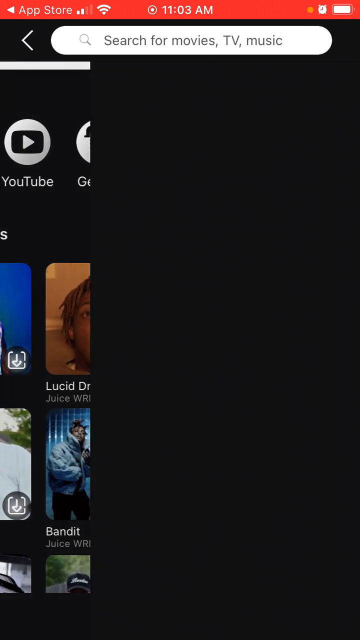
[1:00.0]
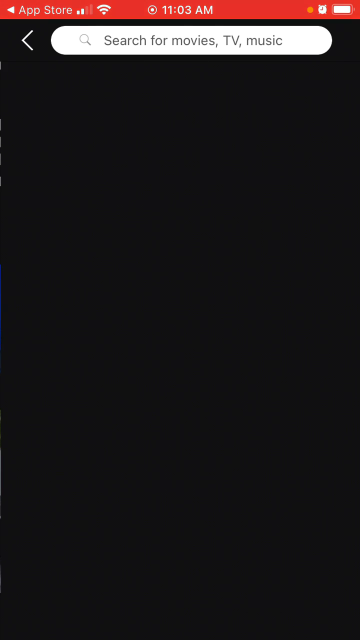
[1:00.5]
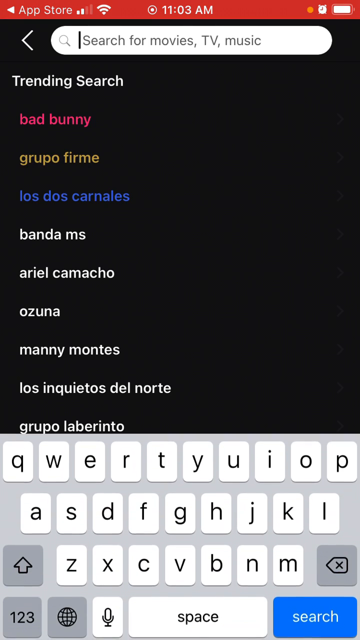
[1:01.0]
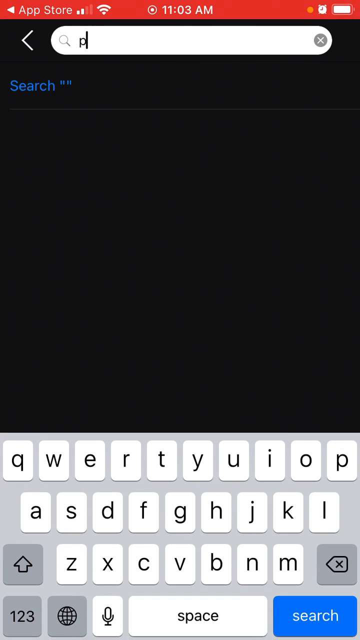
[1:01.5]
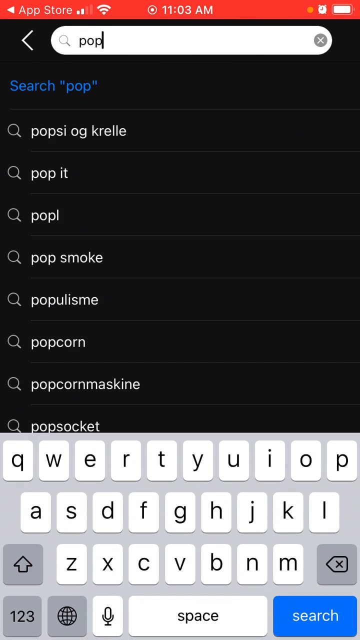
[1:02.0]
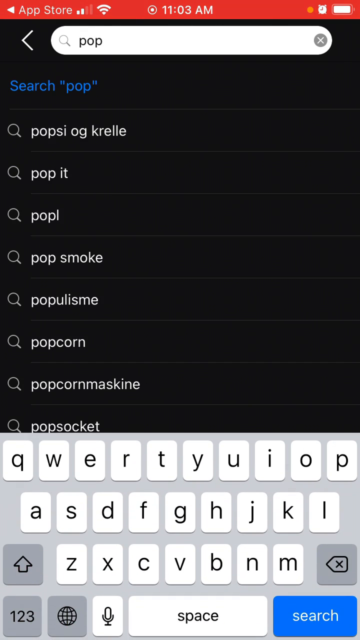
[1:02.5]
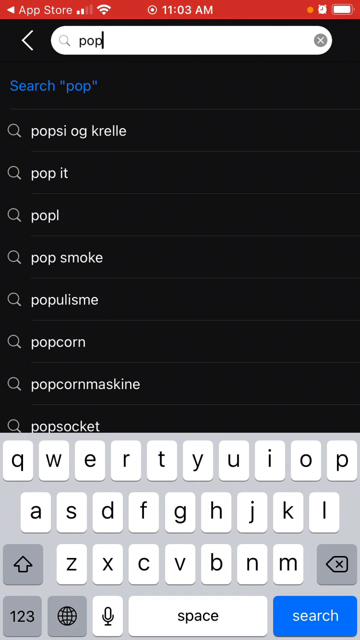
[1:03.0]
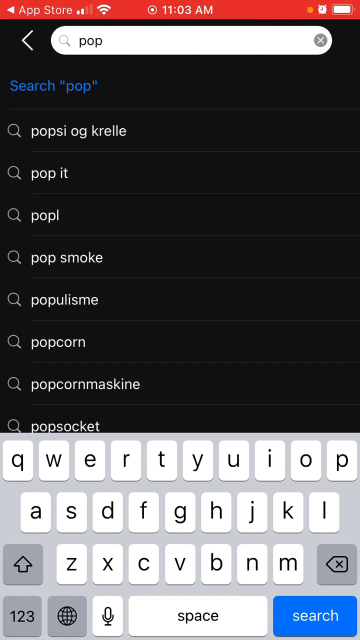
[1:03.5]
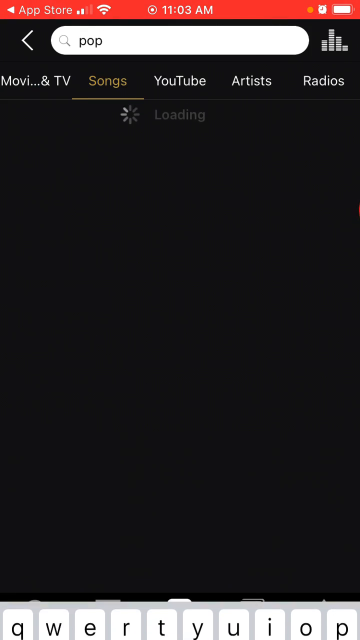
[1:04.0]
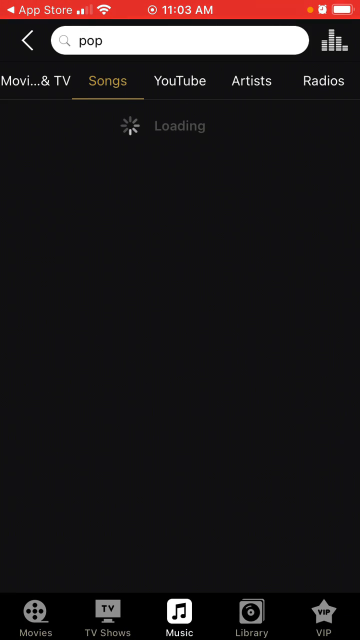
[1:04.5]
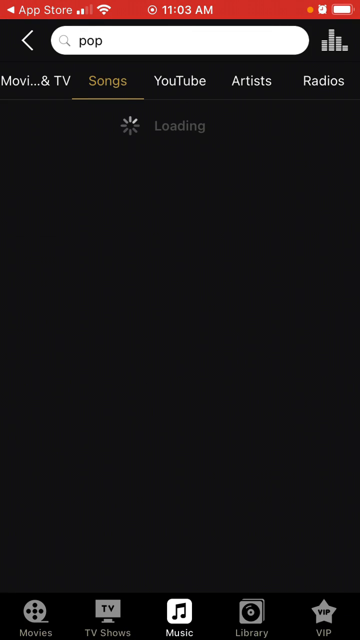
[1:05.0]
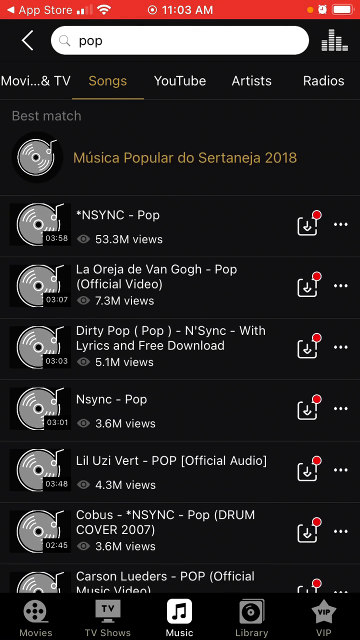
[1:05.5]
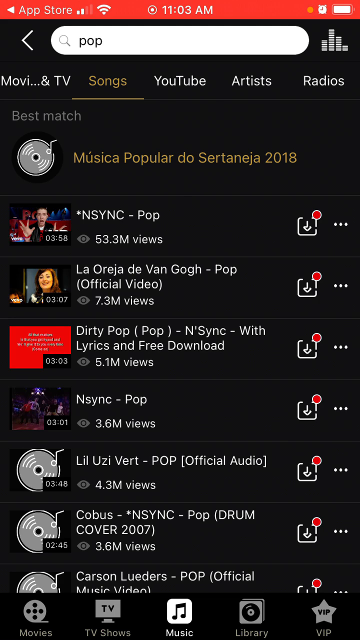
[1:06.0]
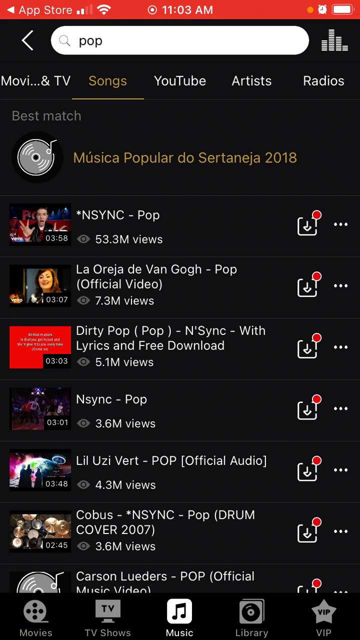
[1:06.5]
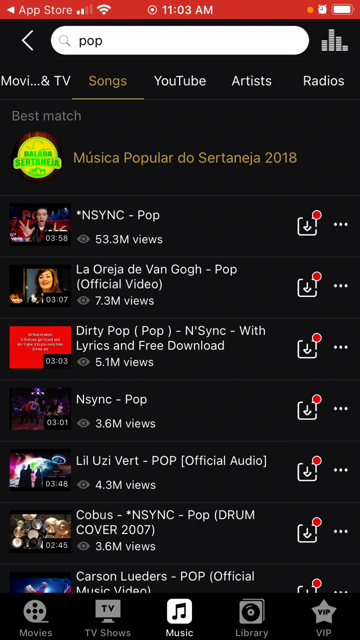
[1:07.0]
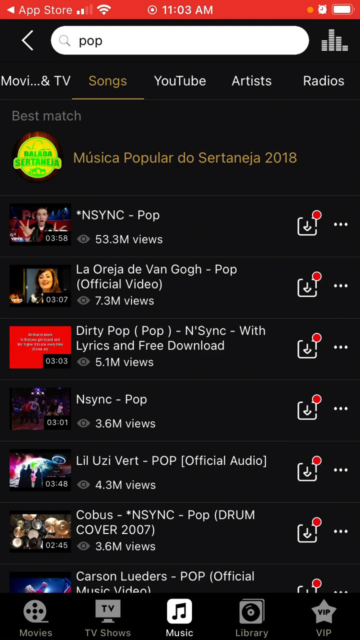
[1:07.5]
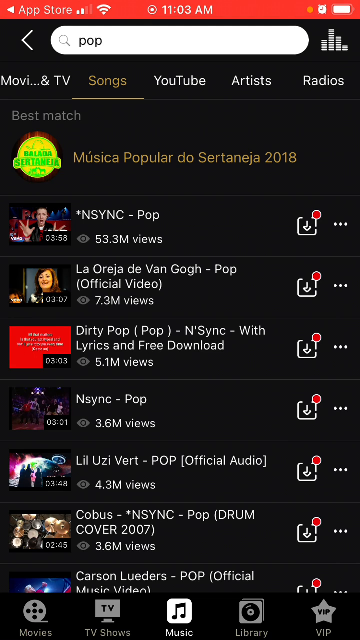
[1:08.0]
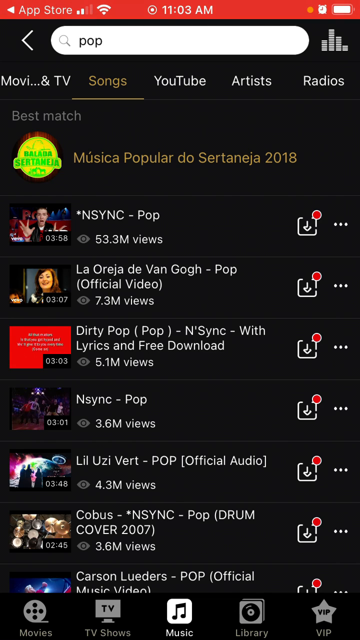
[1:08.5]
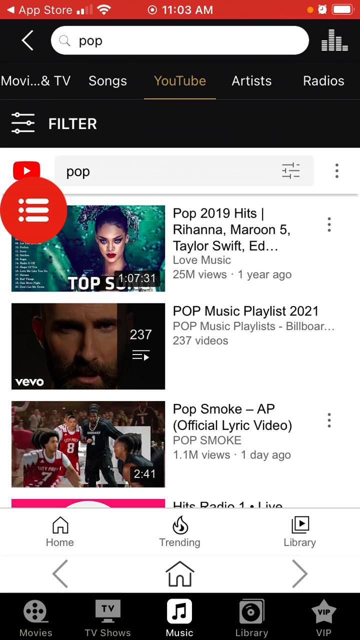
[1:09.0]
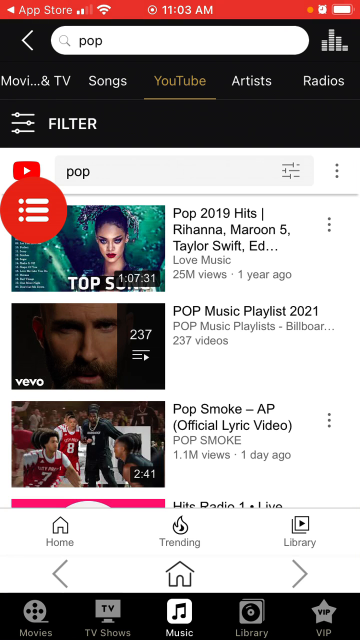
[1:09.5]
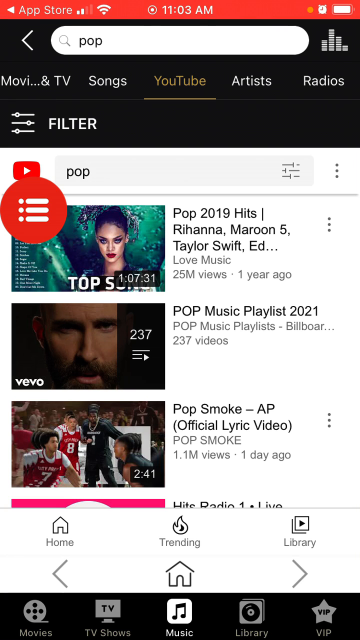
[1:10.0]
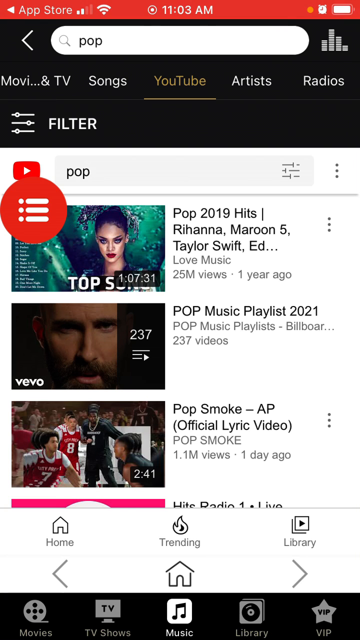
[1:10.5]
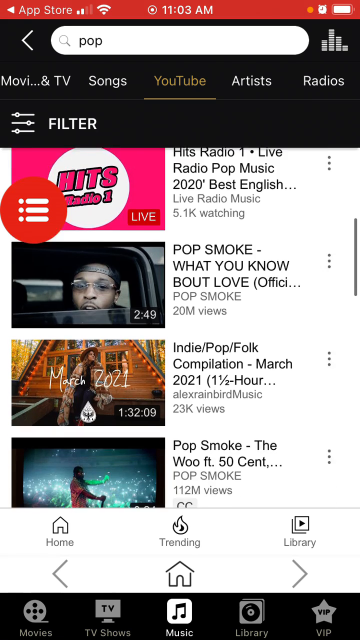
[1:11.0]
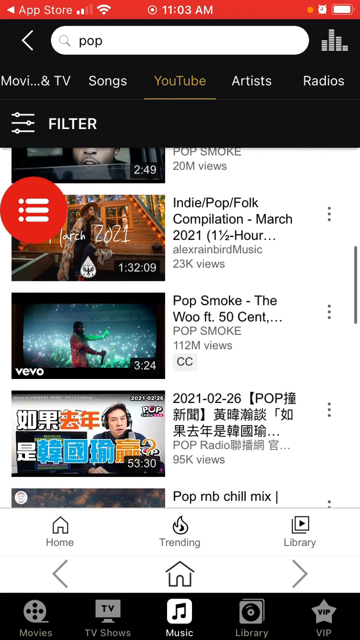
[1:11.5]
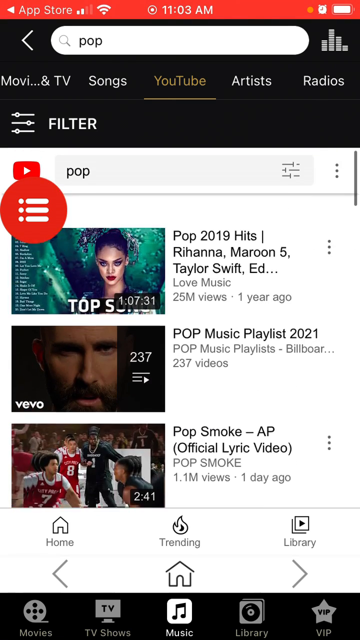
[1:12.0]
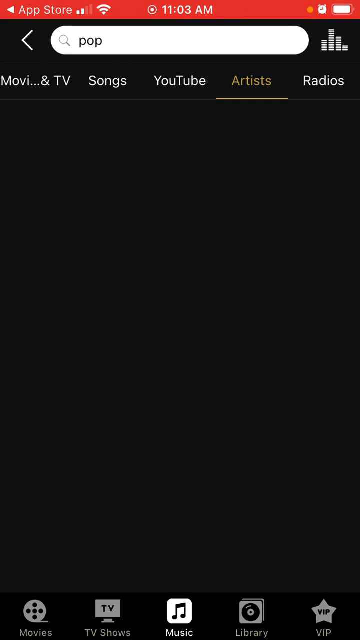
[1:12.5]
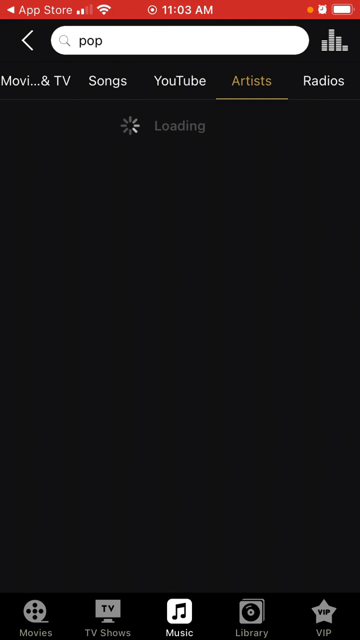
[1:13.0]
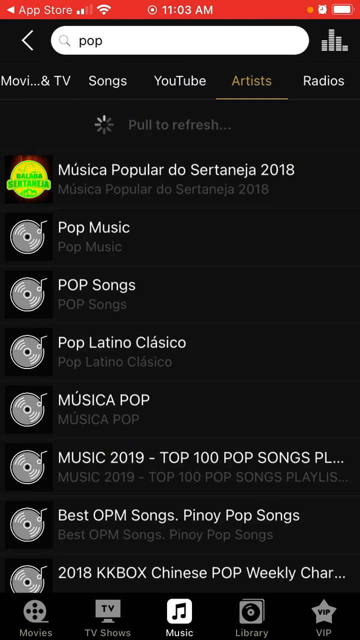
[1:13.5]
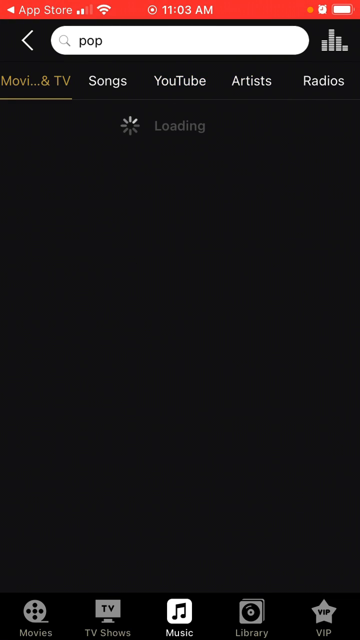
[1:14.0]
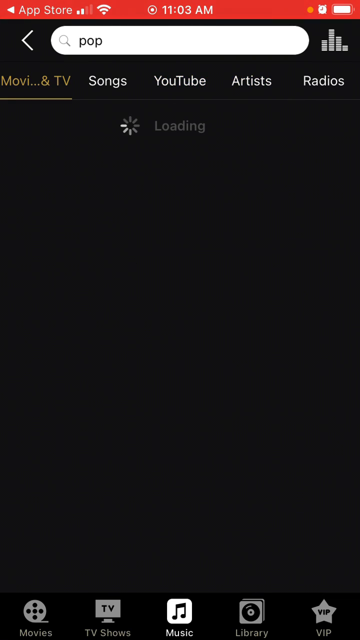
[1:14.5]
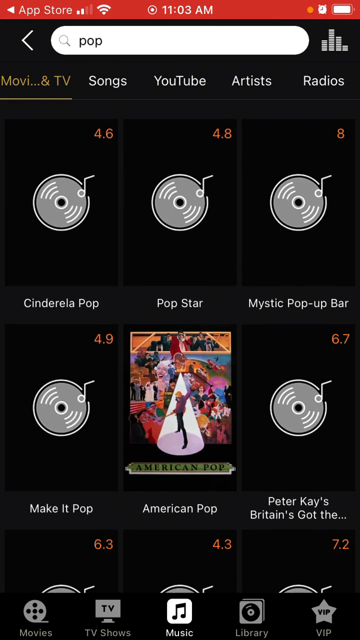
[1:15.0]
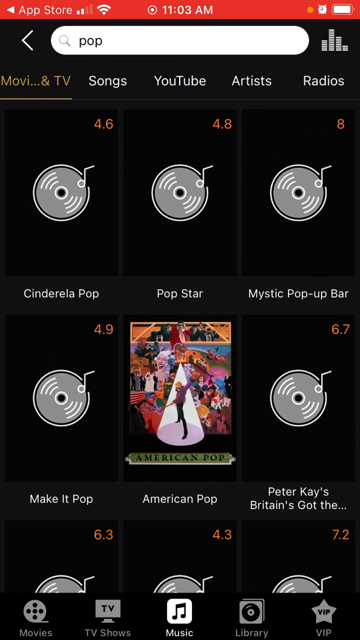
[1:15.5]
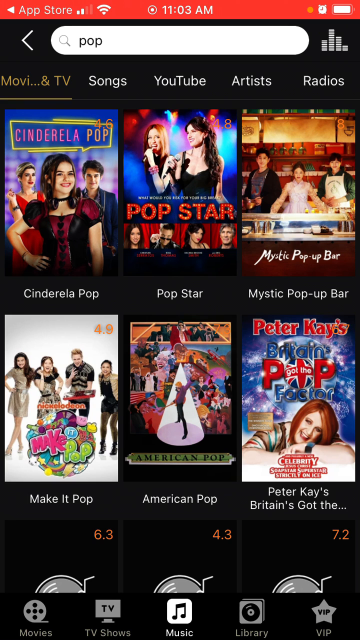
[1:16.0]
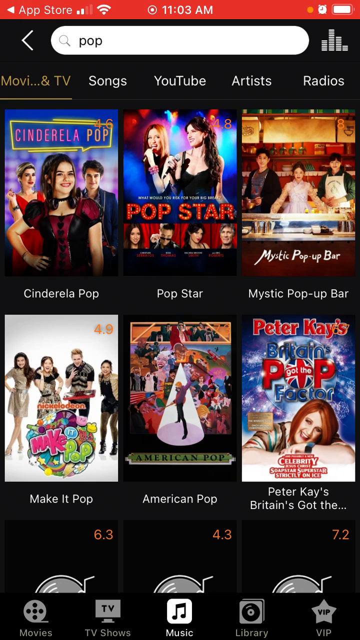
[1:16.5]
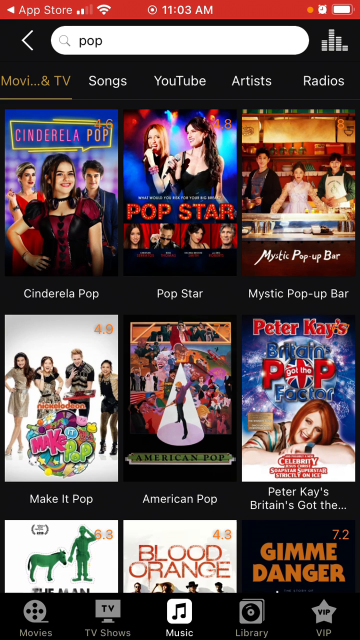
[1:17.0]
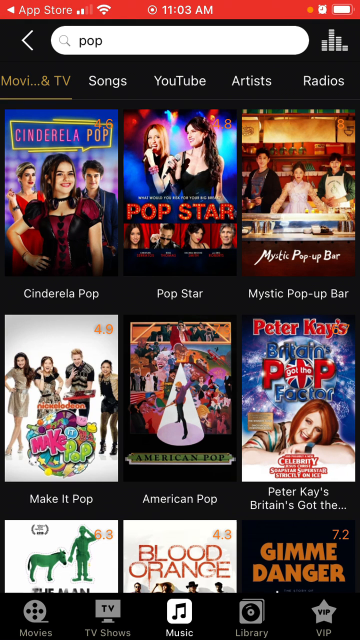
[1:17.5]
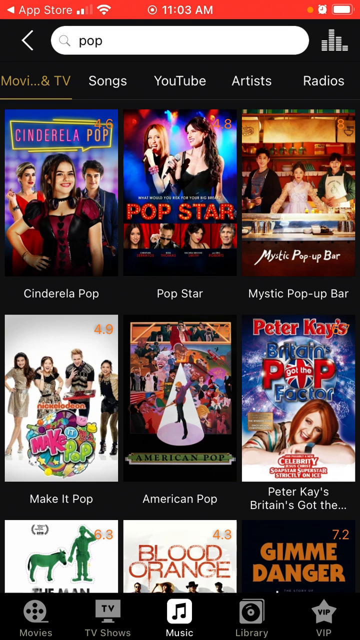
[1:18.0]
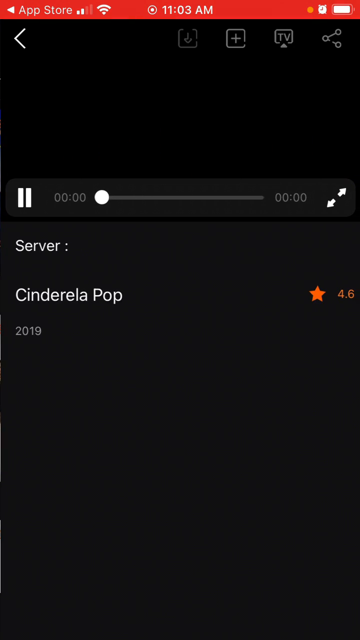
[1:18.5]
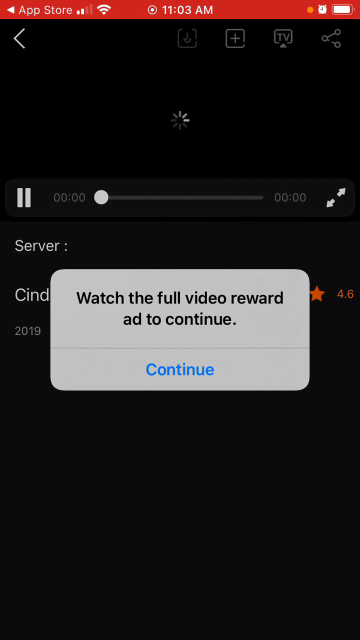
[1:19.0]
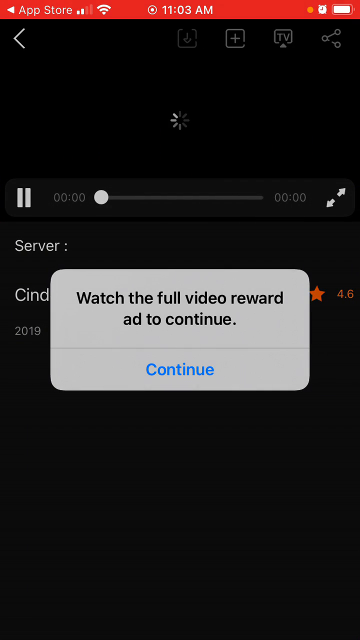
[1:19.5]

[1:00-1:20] A phone screen recording shows a red bar at the top reading "App Store," the time 11.03 AM, and a nearly full battery. There is an arrow button in the top left corner with a search bar beside it reading "search for movies, TV, music." Below is sort of a split screen as the user navigates from one page to another. One side shows CD album covers and the other is solid black. They slide it over and type "pop" into the search bar. Several tabs appear: movies and TV, songs, YouTube, artists, and radios. The songs tab is highlighted, showing Best Match, Musica, Popular, NSYNC, and Dirty Pop by NSYNC with lyrics and free download. Several other artists appear, and the images beside them load slowly. The user highlights YouTube, which shows Pop Music Playlist 2021, Pop Smoke, Official Lyric Video, Hits Radio, Live Radio, and Pop Music. They scroll down very quickly past other YouTube thumbnails, then click on movies and TV, and several items appear.